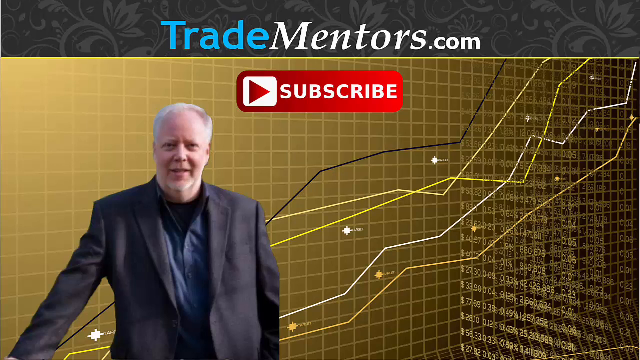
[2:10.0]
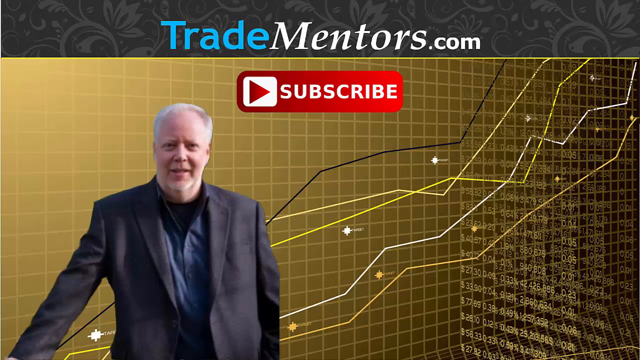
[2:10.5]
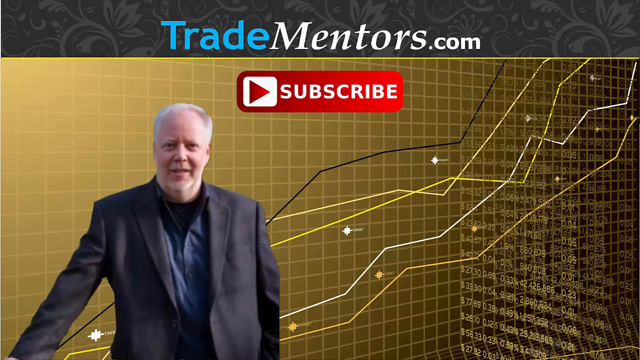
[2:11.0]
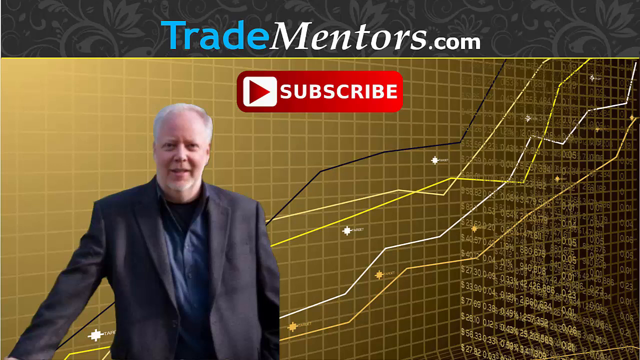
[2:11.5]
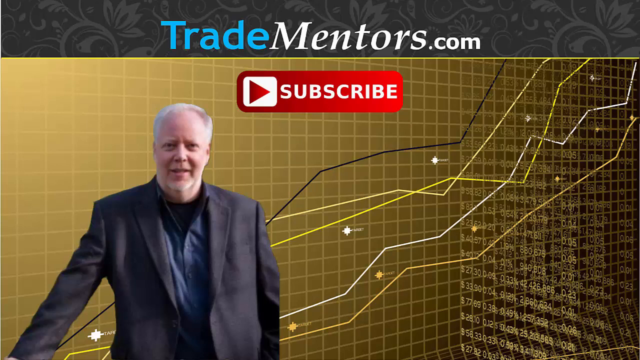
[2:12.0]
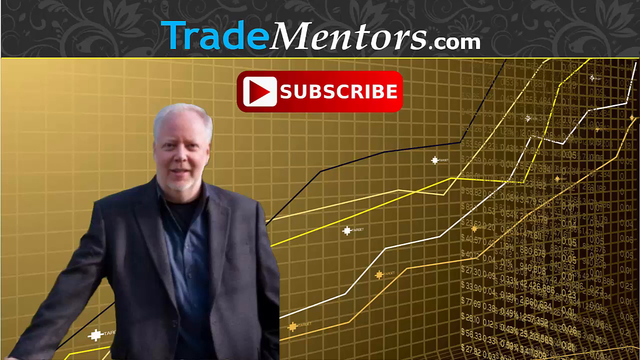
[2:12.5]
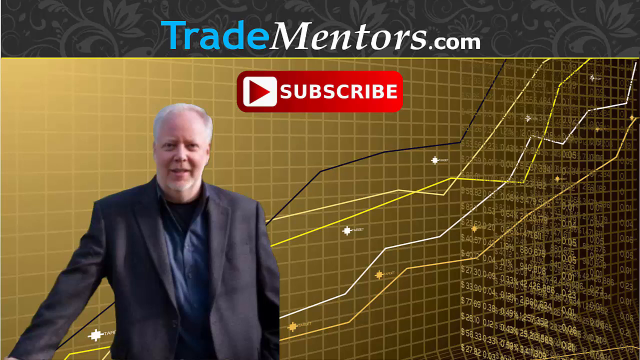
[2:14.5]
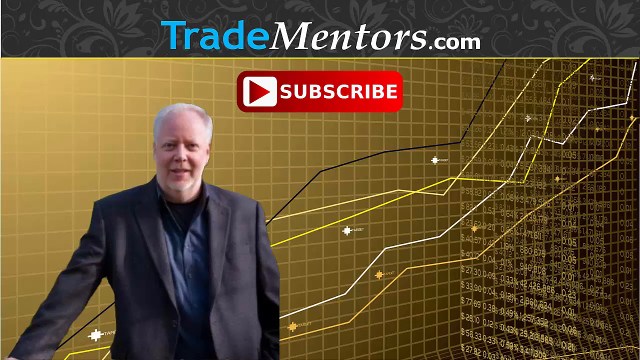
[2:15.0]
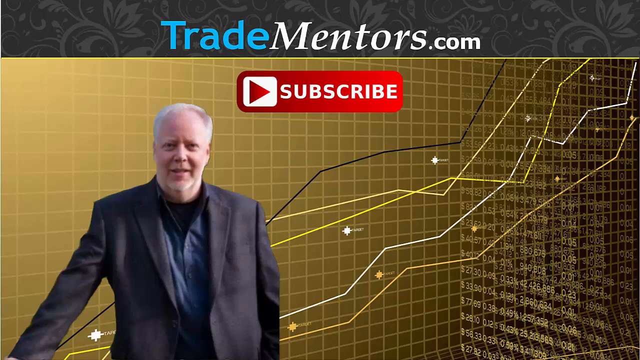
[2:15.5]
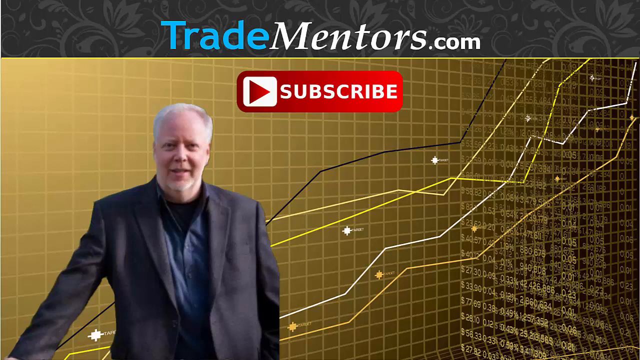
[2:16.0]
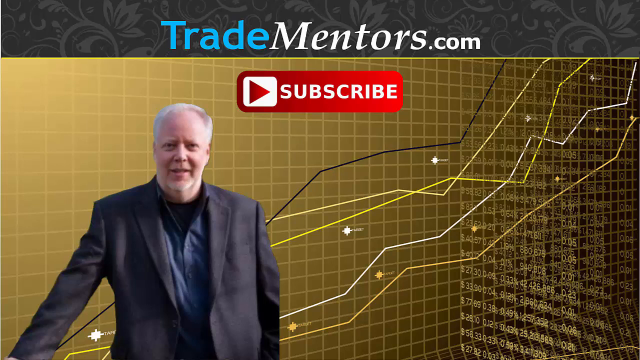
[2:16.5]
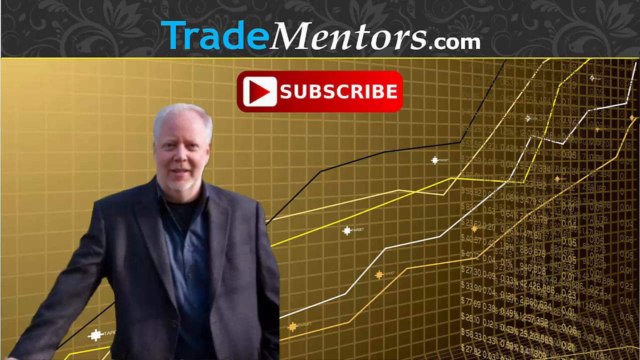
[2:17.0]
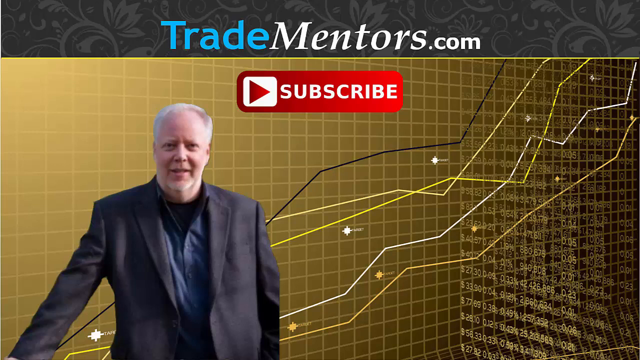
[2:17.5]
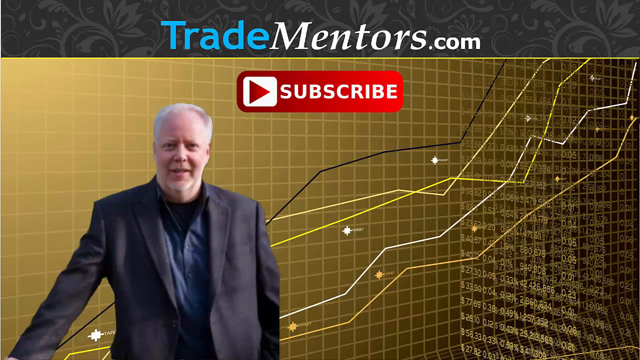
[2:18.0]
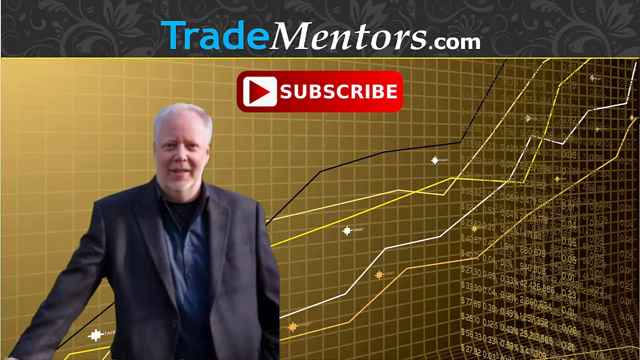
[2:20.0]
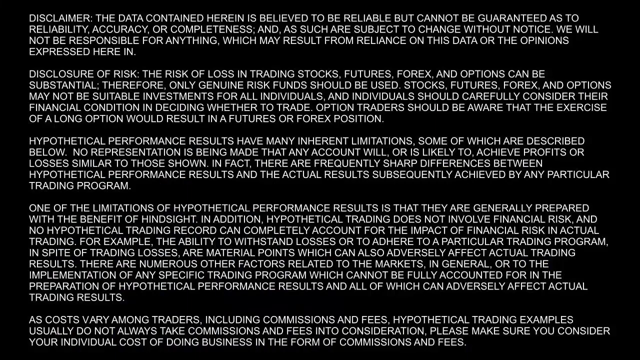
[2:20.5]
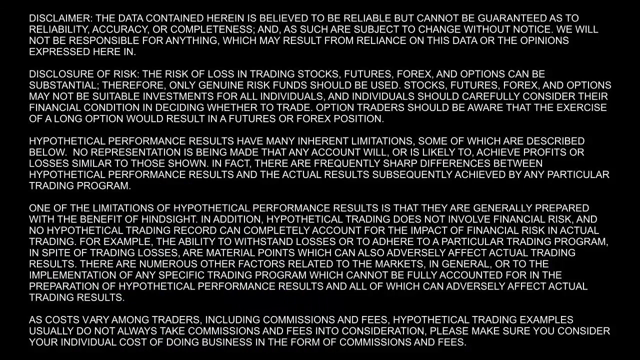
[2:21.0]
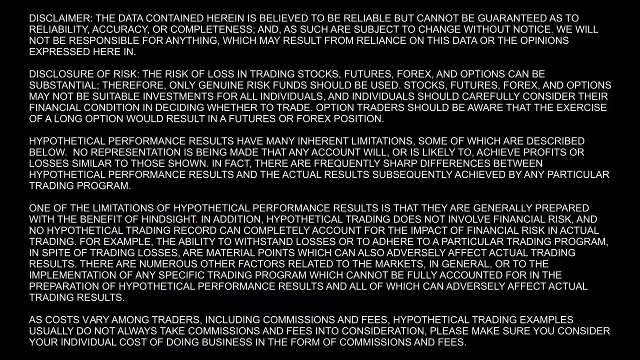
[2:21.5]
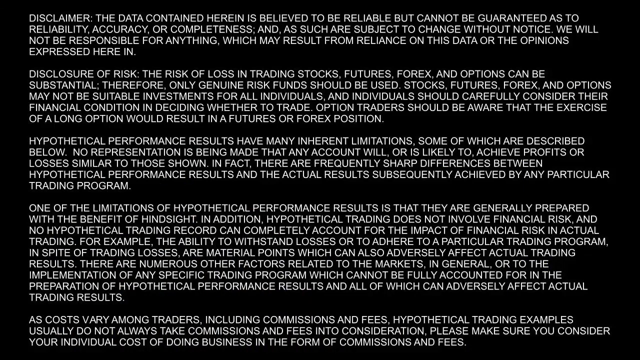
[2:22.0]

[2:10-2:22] A static image shows "TradeMentors.com" at the top with a red YouTube subscribe button below it. Below that, toward the bottom left, is a man with gray hair wearing a dark suit and a blue shirt. Behind are little lines like stock market lines and a gold checkered pattern. Just to the right of the stock market lines are a variety of numbers that look like dollar amounts and percentages, all apparently related to stock markets.